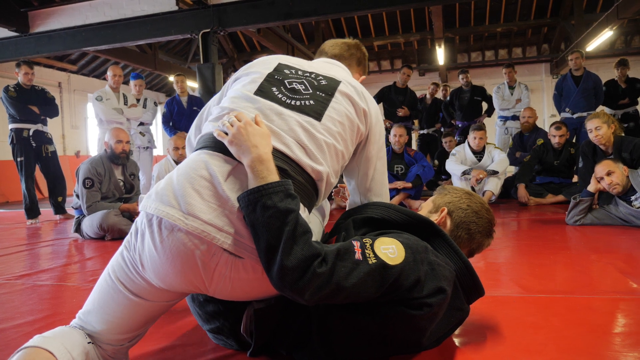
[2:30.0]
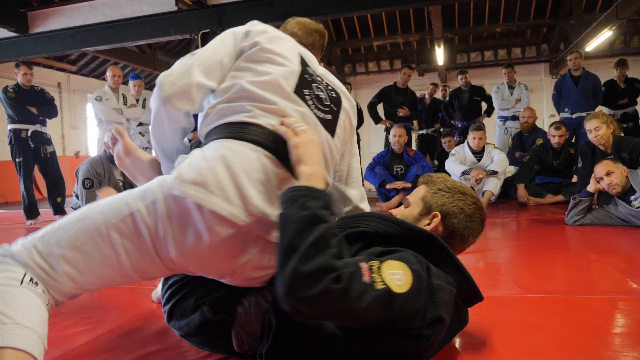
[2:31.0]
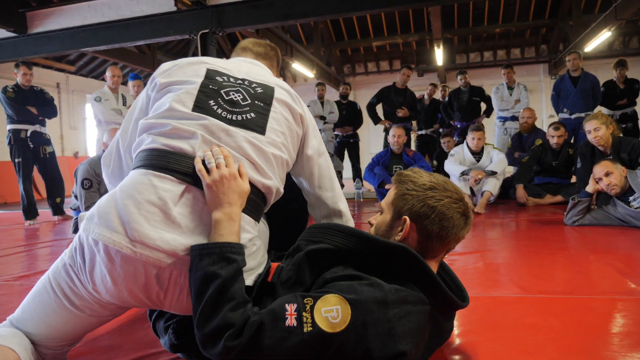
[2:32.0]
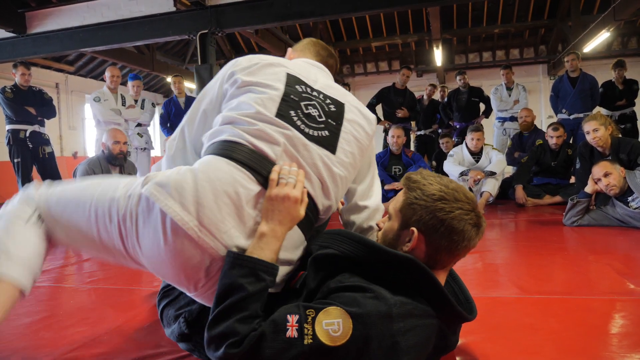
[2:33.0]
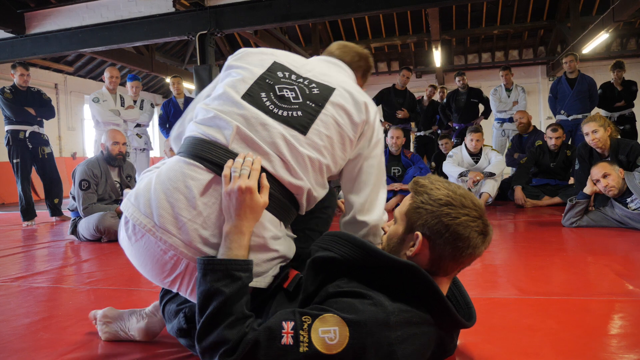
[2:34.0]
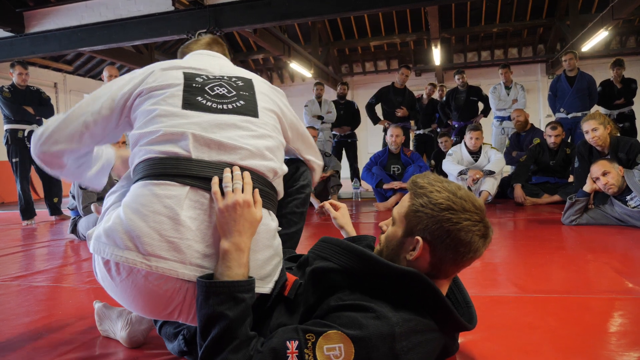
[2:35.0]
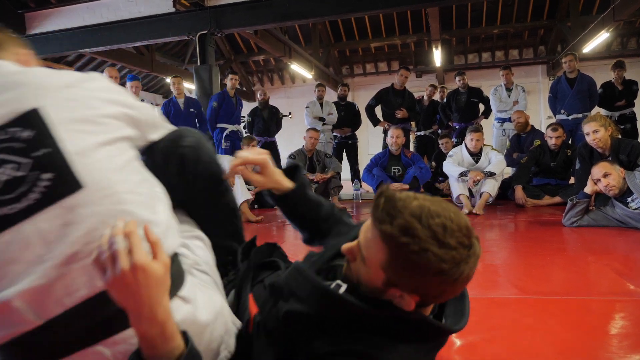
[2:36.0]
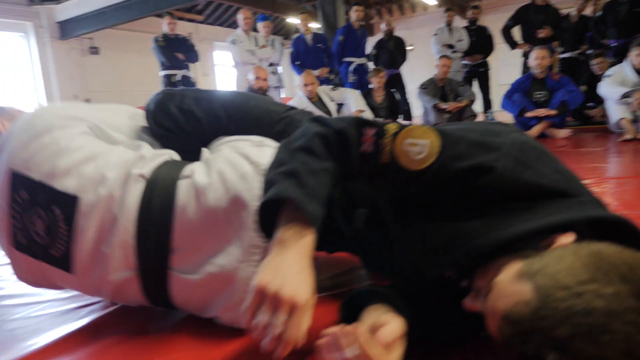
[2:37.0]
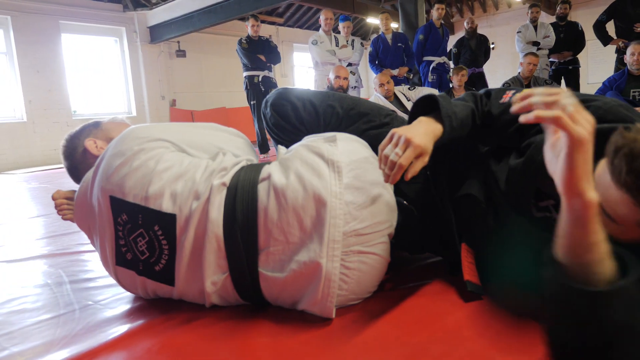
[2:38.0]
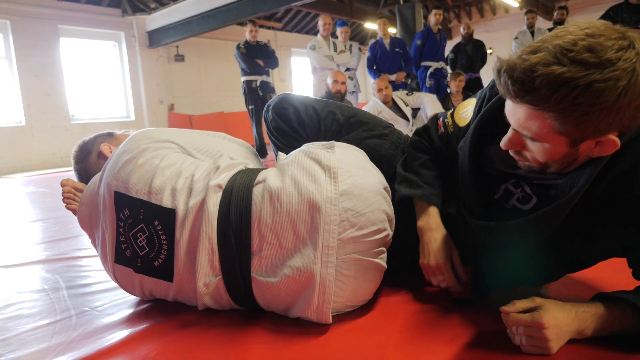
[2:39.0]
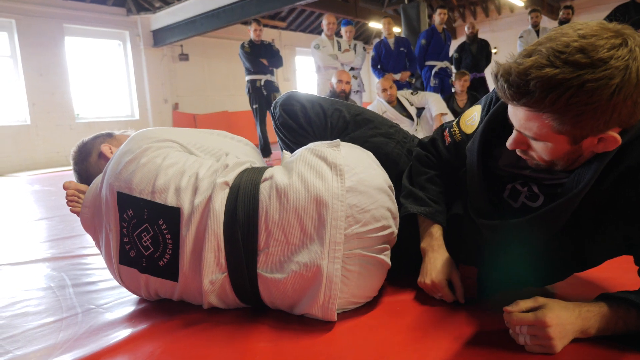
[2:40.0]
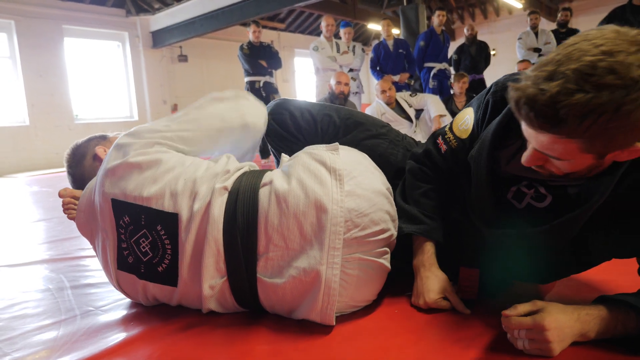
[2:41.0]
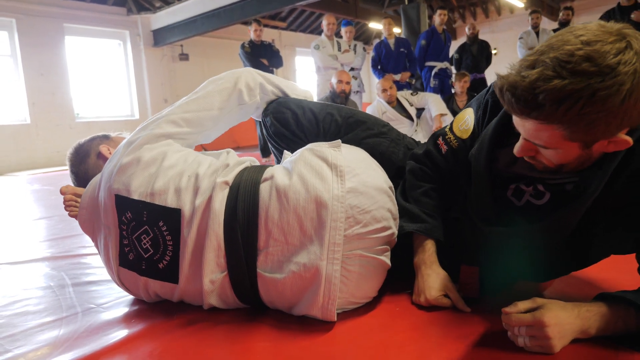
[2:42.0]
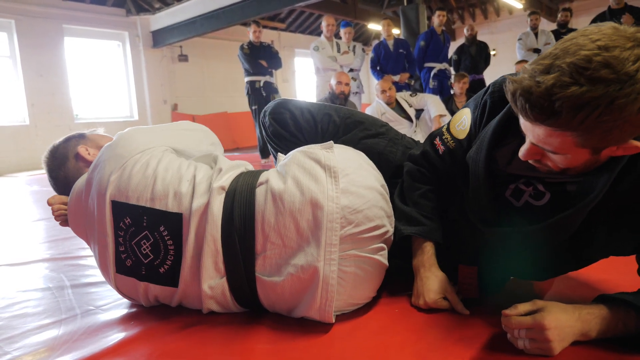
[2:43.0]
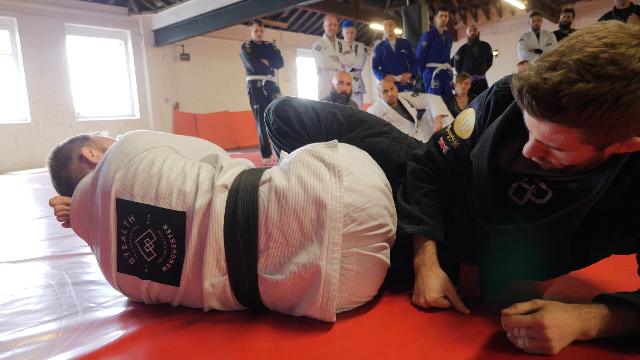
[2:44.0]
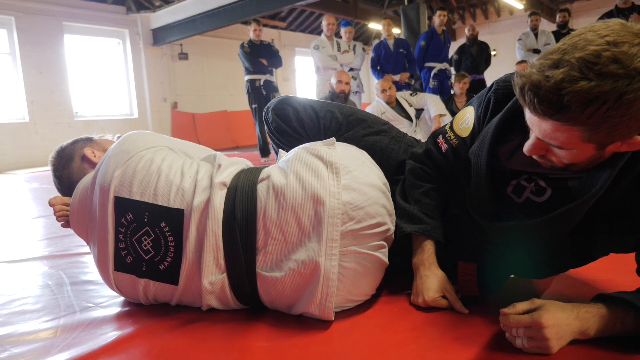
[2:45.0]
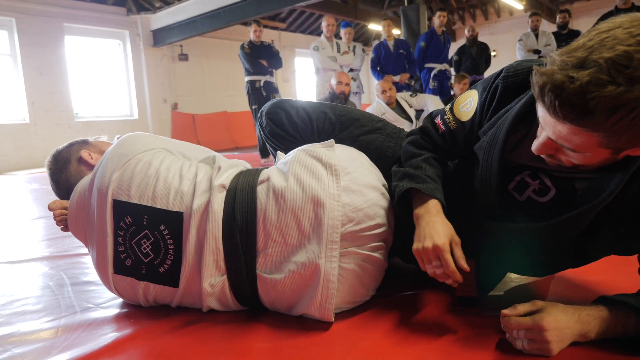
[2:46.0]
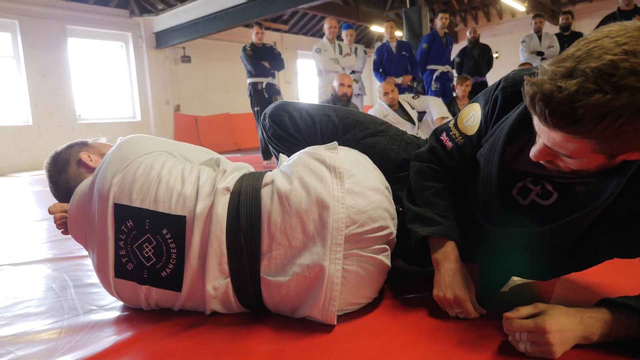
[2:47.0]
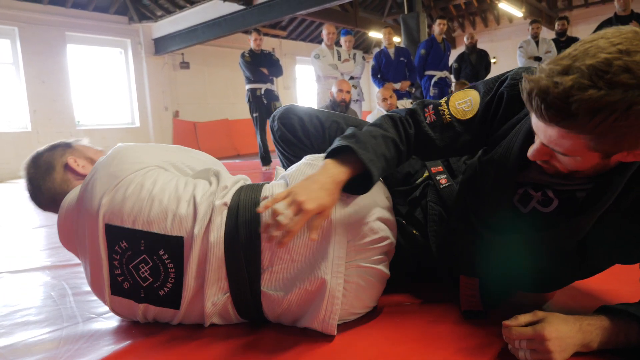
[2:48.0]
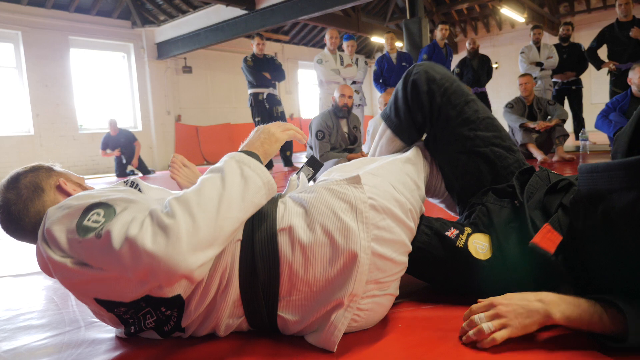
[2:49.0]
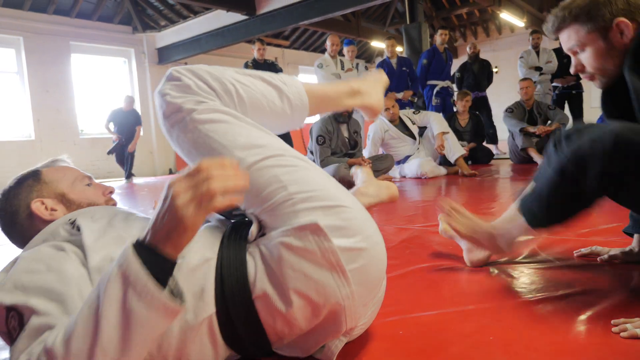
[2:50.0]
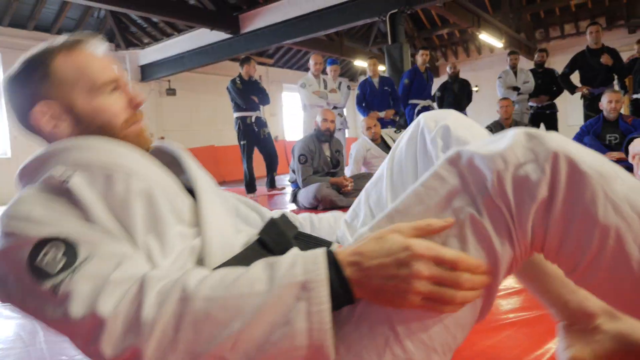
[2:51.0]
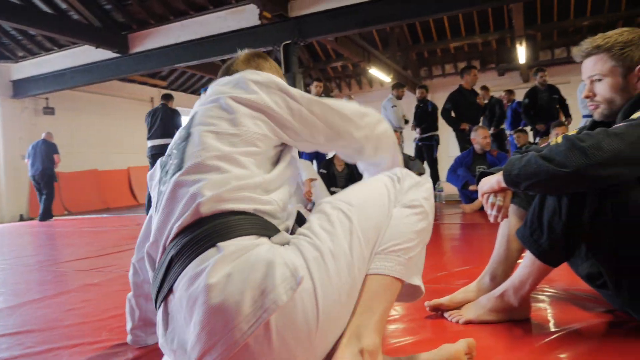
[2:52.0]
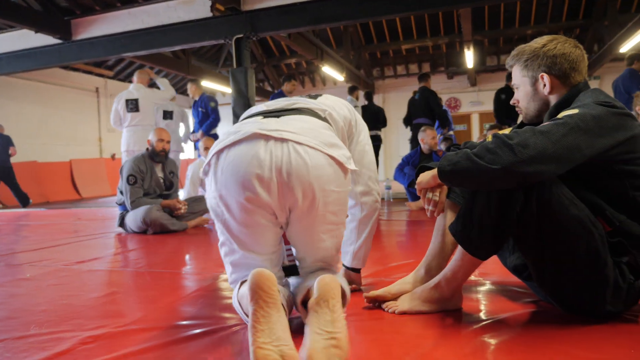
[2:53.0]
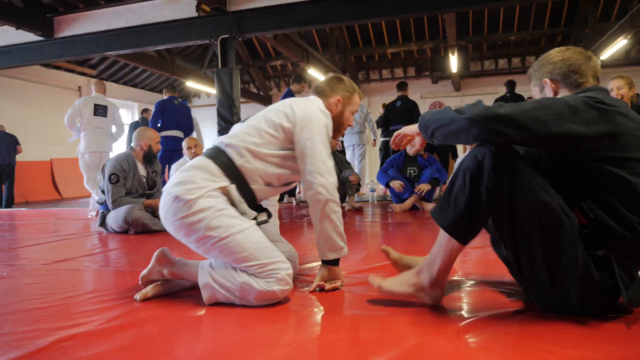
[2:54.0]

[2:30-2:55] The man in white continues to kind of sit on the other man cross-legged, their legs almost completely tangled. He leans back and they both roll to their sides. The instructor in the white karate suit is kind of holding on to the left leg of the man in the black karate suit, his arms wrapped very tight around it, and he pats the man's knee for a moment, sort of just holding on to it. The man in black taps only the bottom area of his back, and they both sit up on their knees for a second. As the video ends abruptly, some of the students start standing up and walking off, apparently because the class is over.